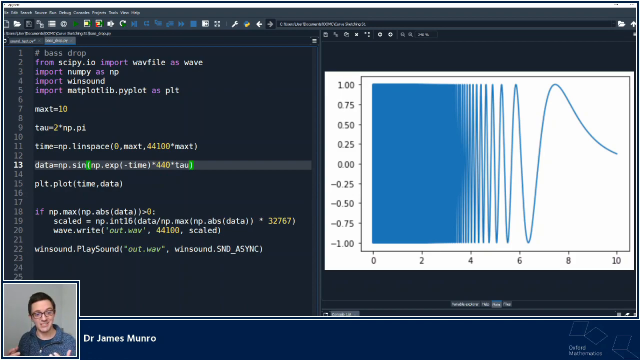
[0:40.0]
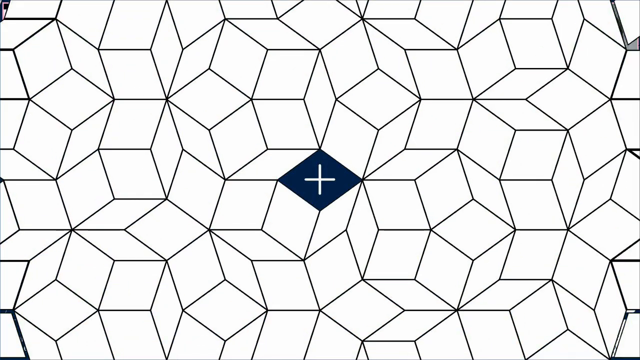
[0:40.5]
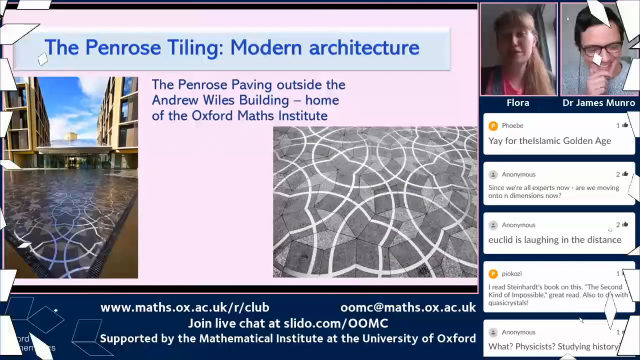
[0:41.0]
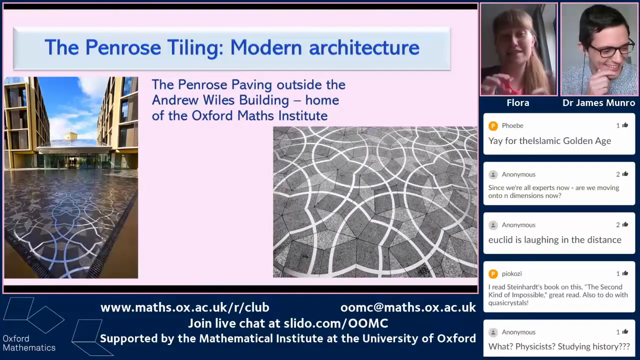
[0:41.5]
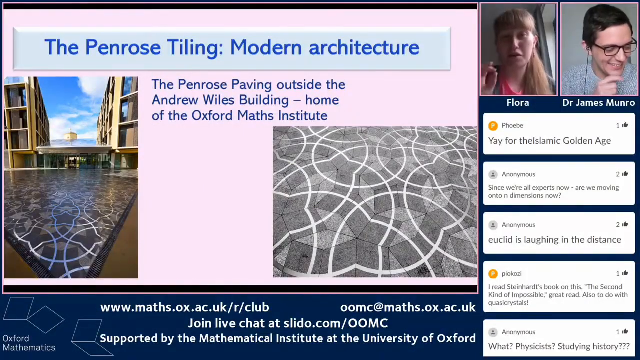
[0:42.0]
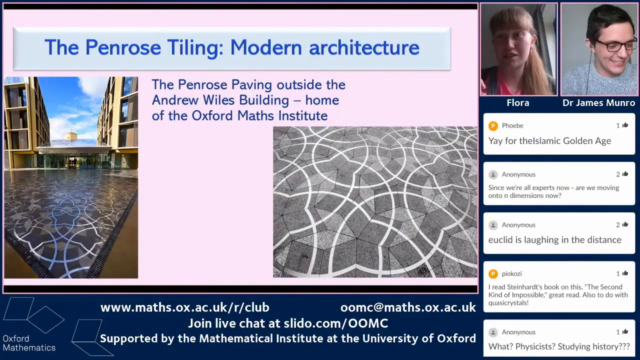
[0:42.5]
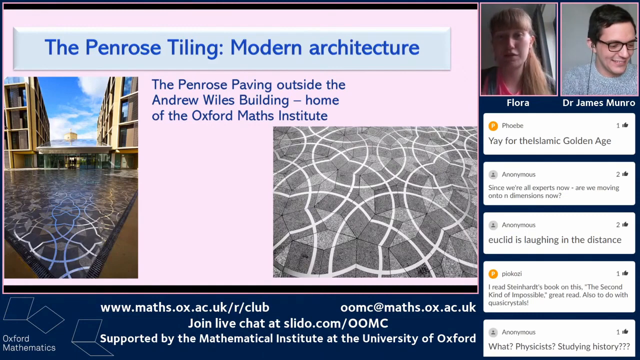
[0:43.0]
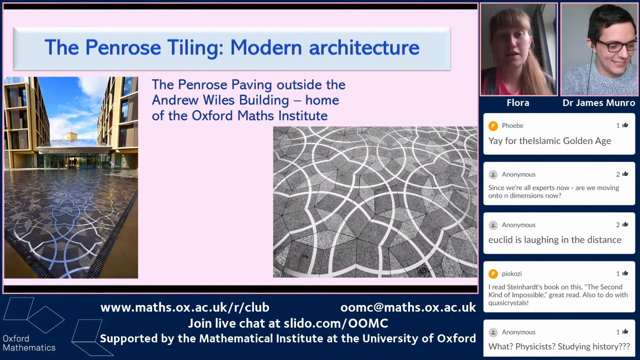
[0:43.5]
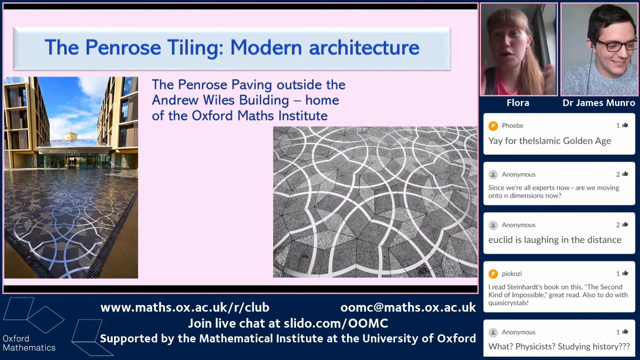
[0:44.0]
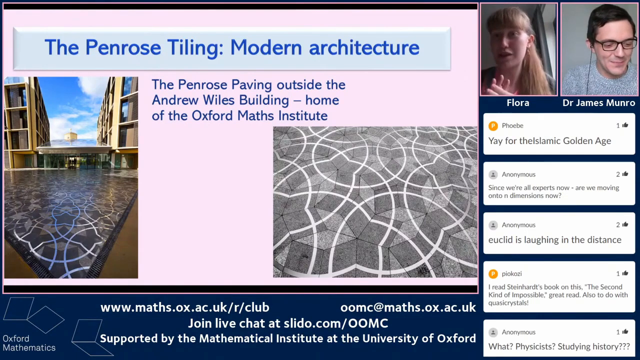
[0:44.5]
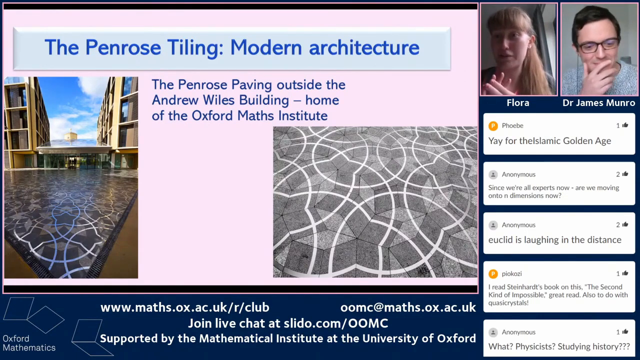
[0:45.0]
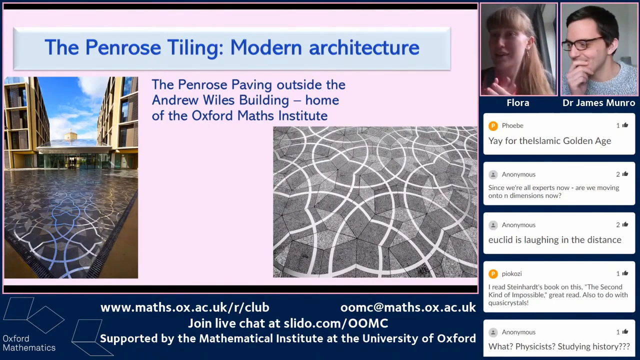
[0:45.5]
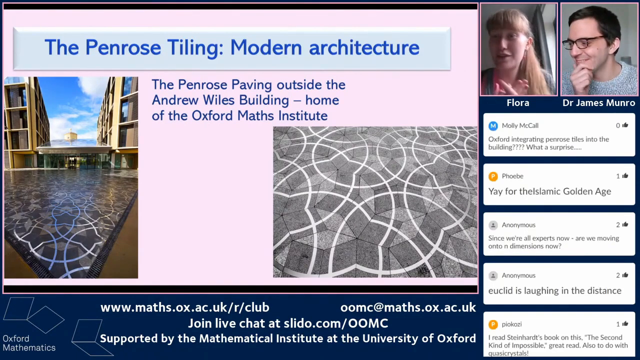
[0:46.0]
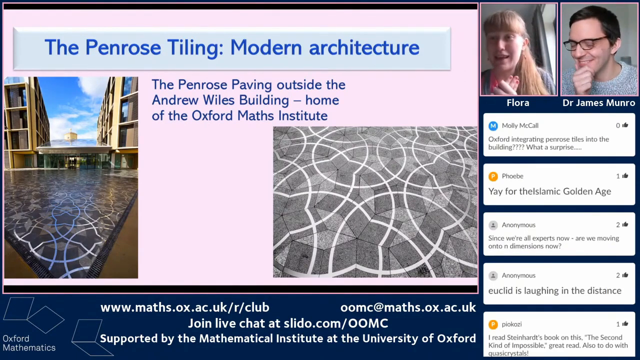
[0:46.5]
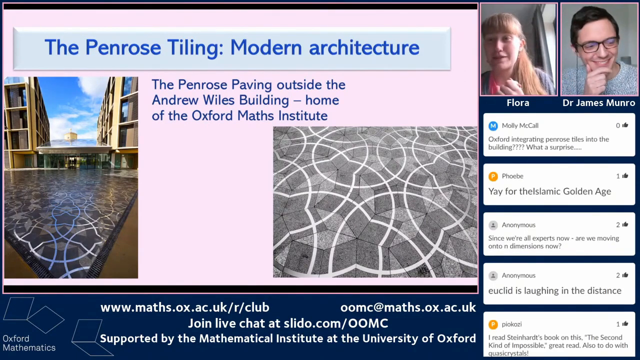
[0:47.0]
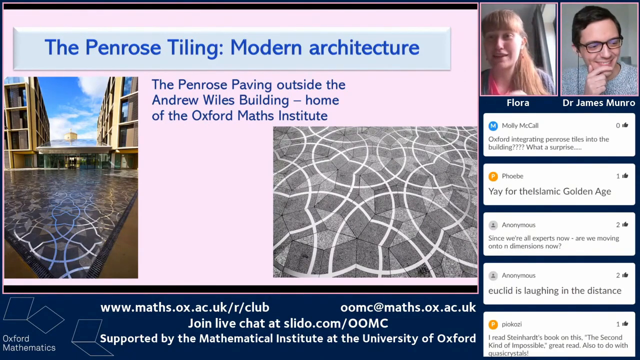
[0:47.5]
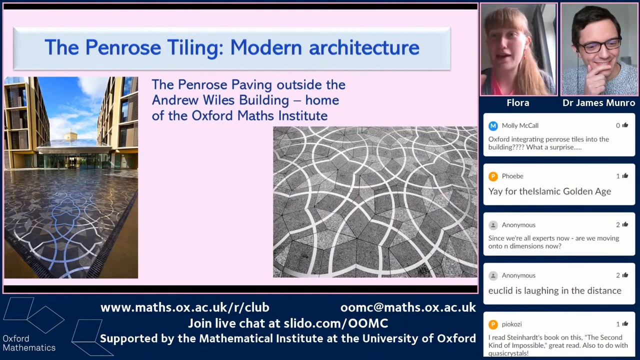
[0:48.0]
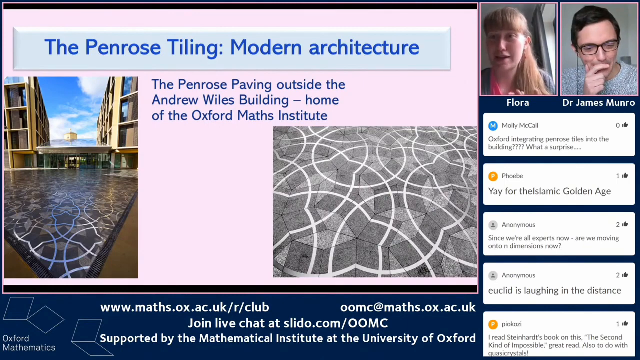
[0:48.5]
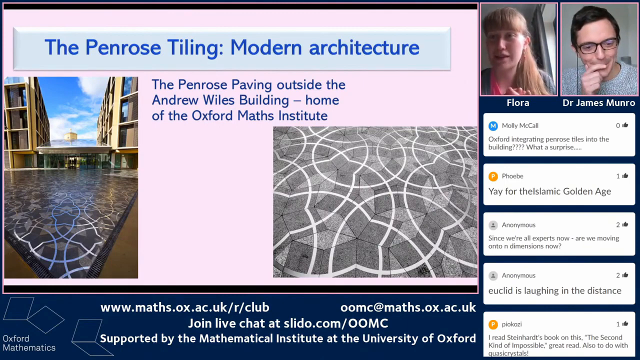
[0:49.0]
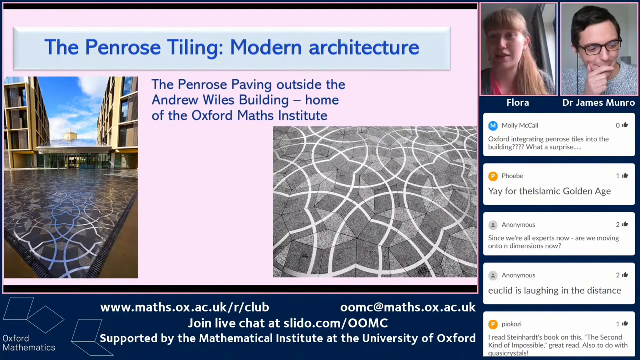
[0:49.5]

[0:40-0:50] A bass drop chart is shown while the two are video chatting, behind the tables, going up and down to show how the bass is dropping. The chart on the page shows the wave and the sound, rising and falling while they chat.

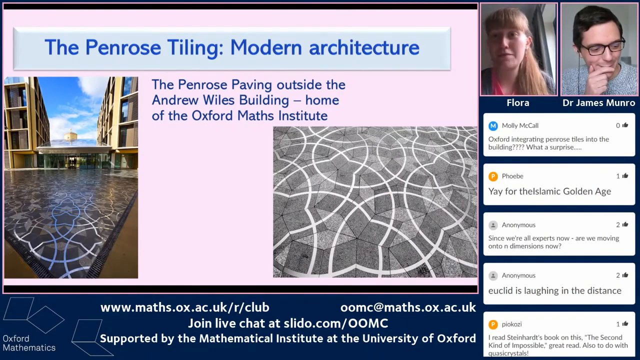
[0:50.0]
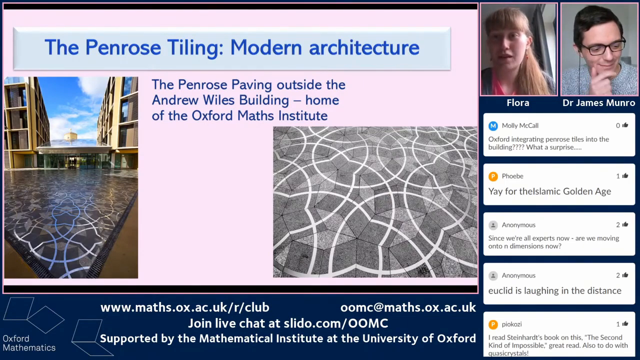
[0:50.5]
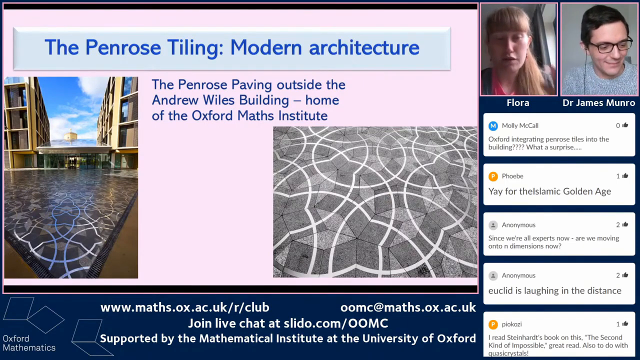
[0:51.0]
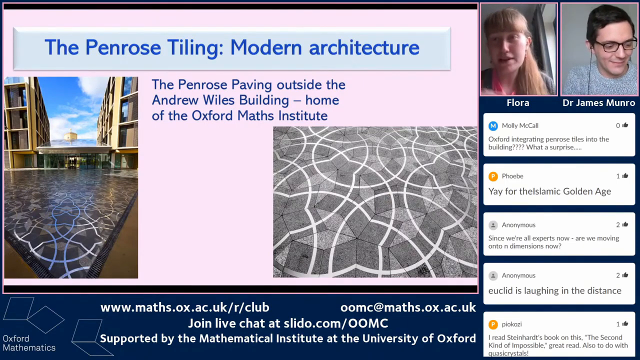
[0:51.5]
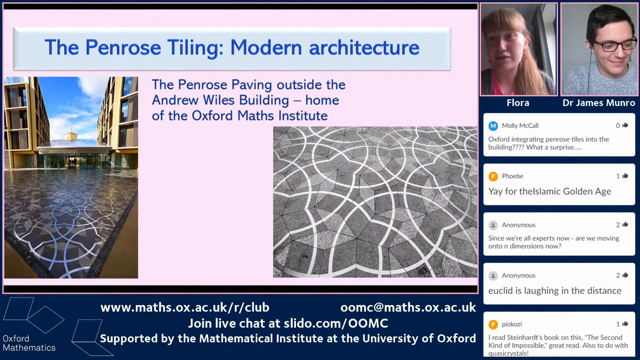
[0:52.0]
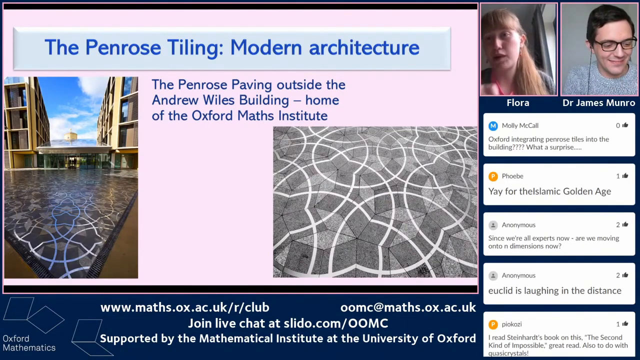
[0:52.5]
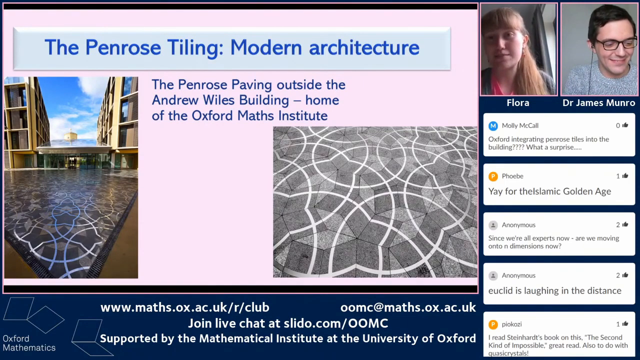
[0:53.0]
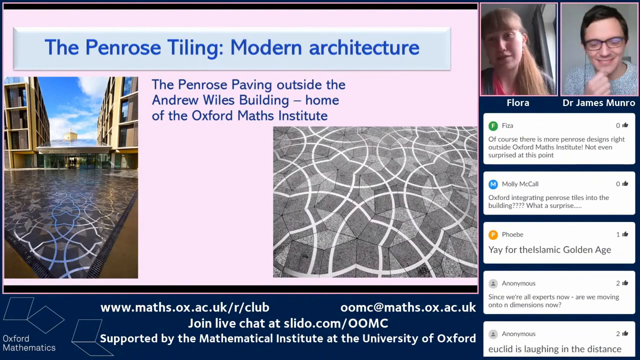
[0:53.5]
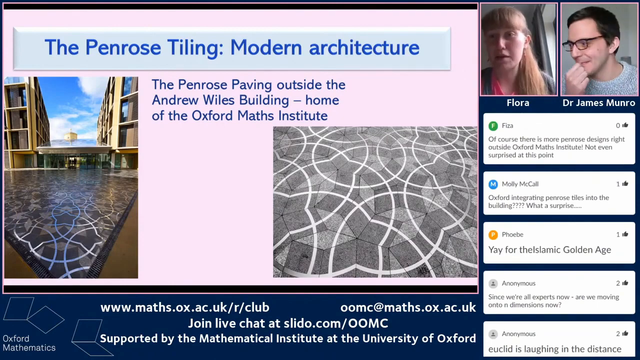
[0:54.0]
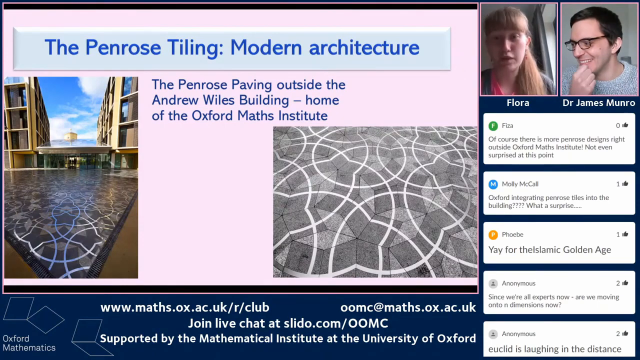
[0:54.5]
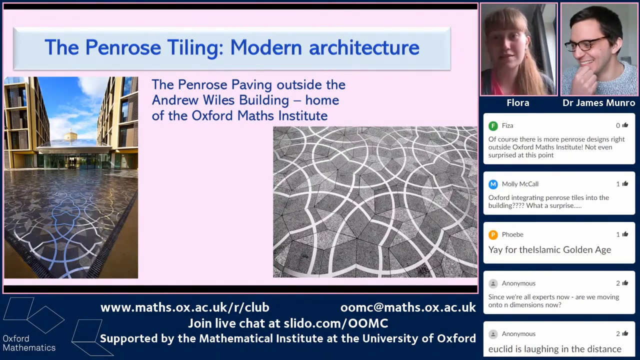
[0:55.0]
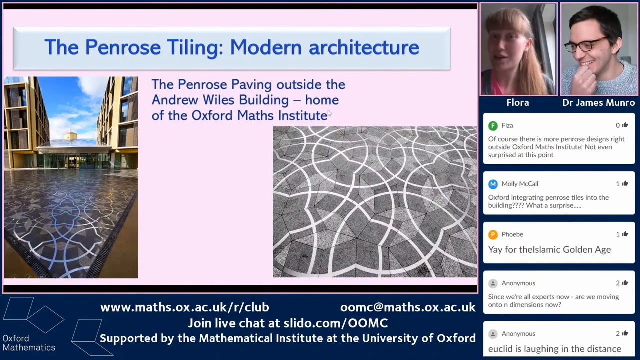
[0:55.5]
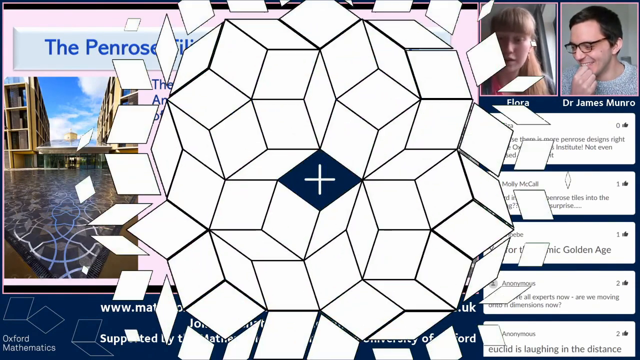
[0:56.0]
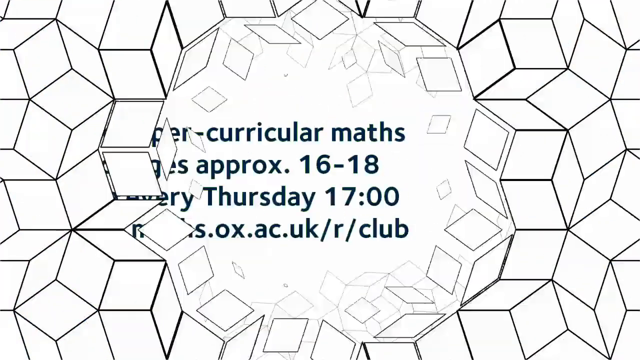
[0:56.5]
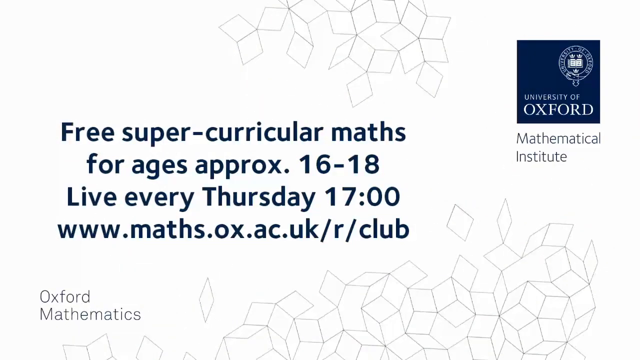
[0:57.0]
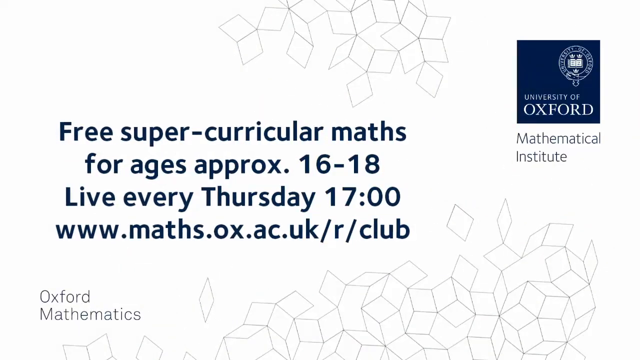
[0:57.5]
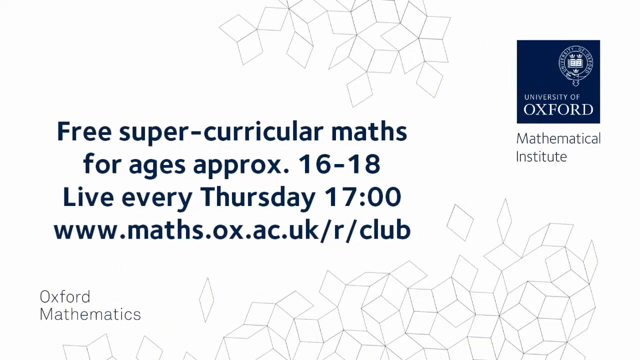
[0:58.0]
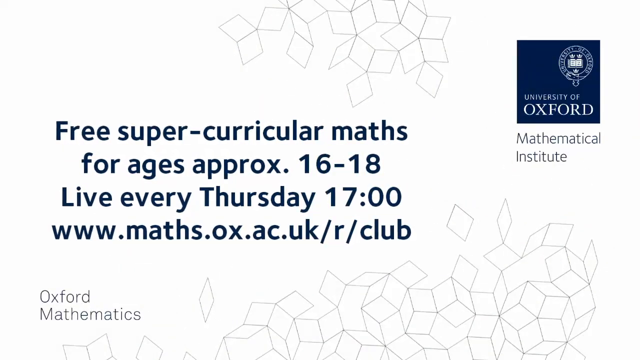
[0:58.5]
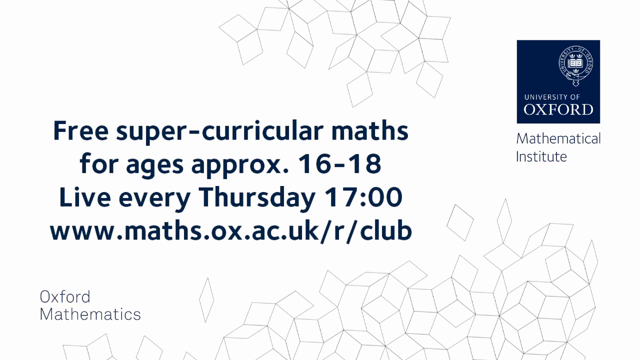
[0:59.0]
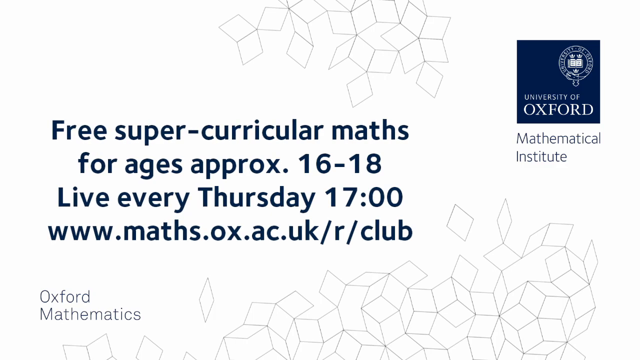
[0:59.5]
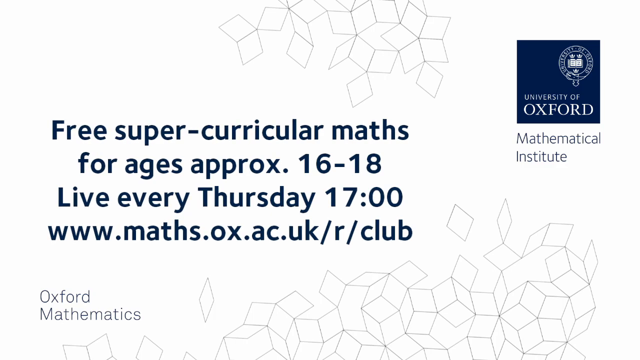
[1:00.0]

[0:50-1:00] The scene shows the Penrose Pavilion outside the Andrew Wallace Building, with images of the outside of the Andrew Wallace Building. Text written at the top refers to the Penrose and modern architecture. Two people, Flora and Dr. James Morrow, are chatting, with the Andrew Wallace Building behind them. Below the images, their chat is turned into text as they talk.